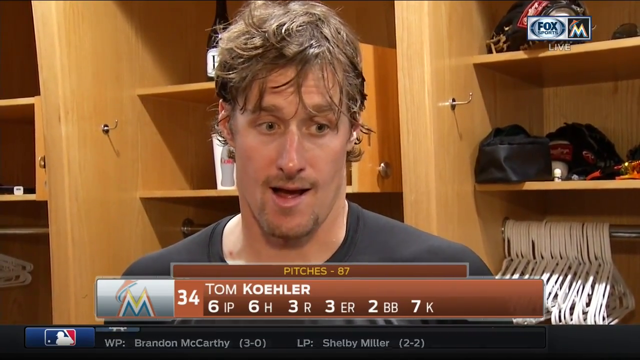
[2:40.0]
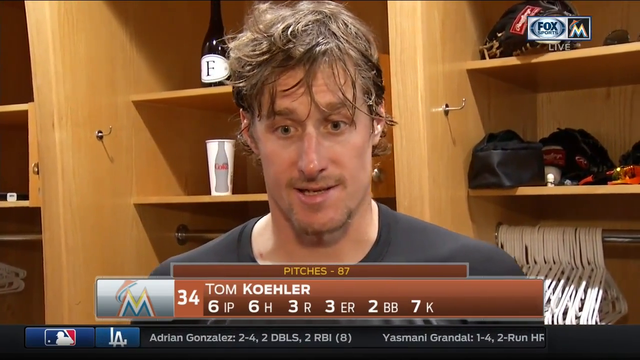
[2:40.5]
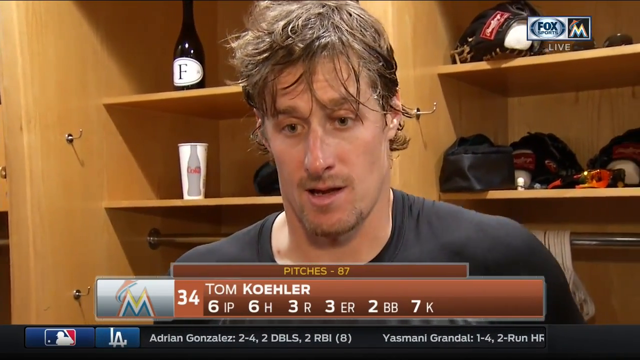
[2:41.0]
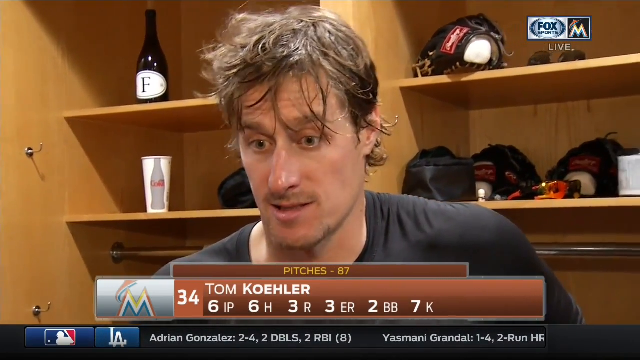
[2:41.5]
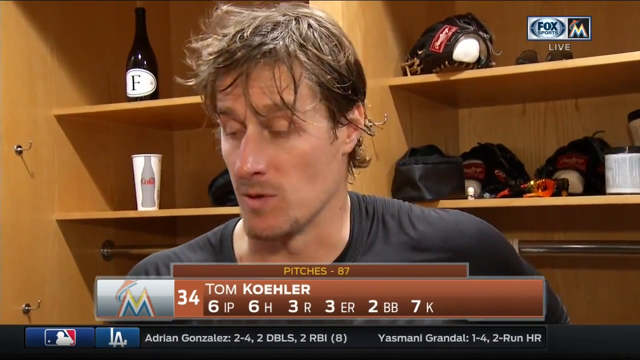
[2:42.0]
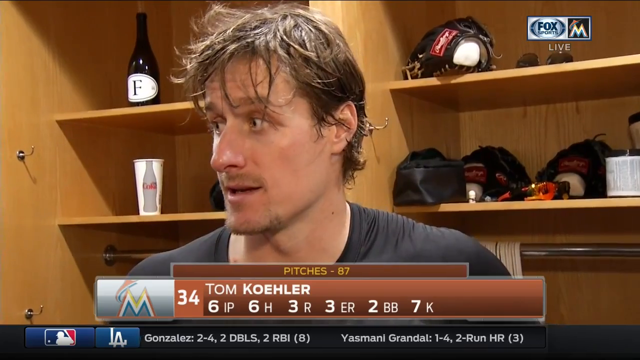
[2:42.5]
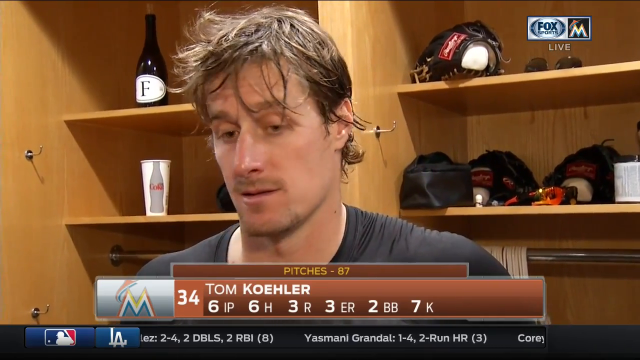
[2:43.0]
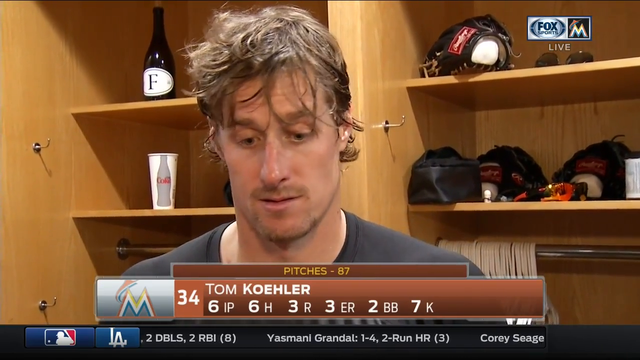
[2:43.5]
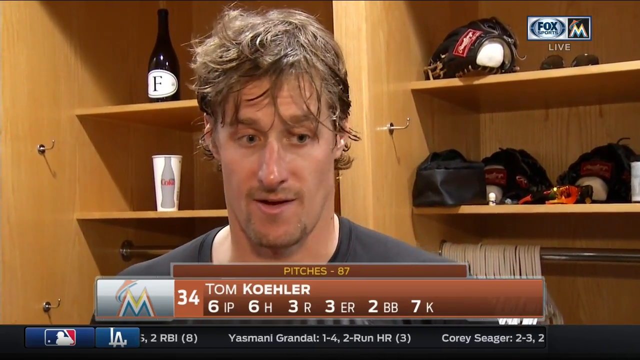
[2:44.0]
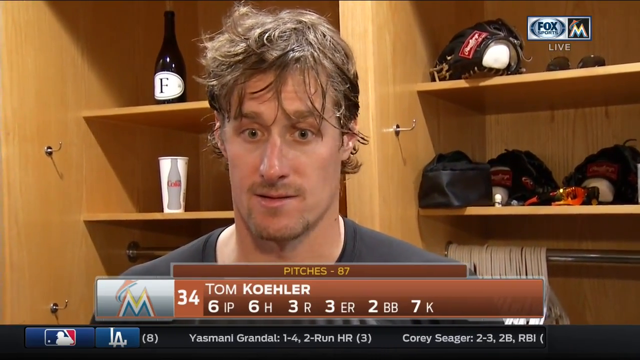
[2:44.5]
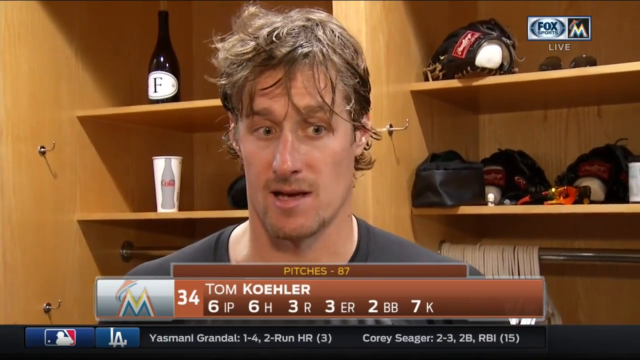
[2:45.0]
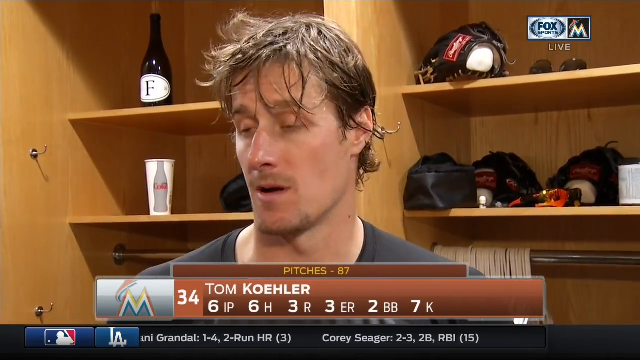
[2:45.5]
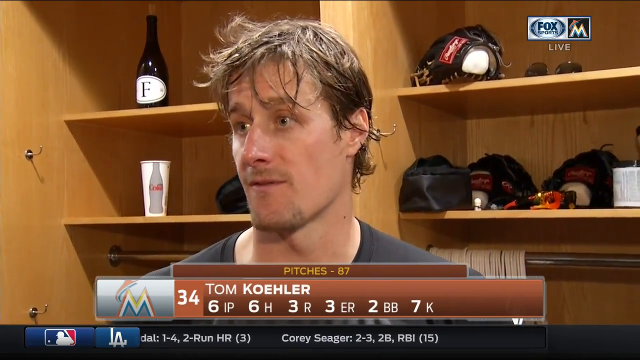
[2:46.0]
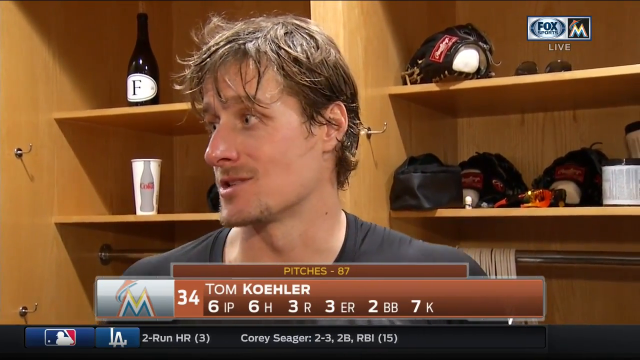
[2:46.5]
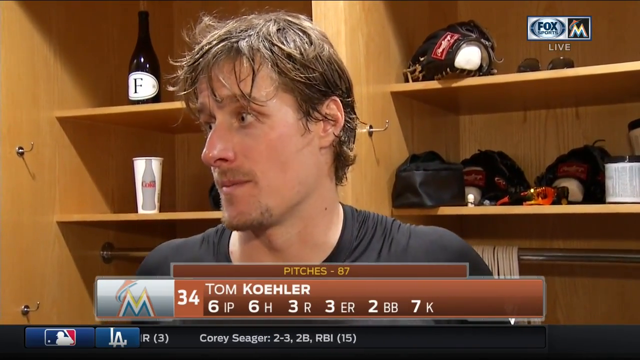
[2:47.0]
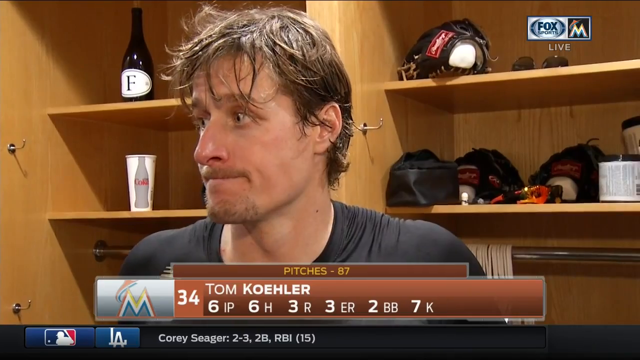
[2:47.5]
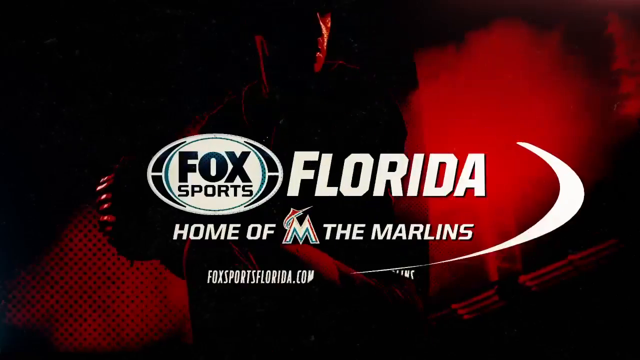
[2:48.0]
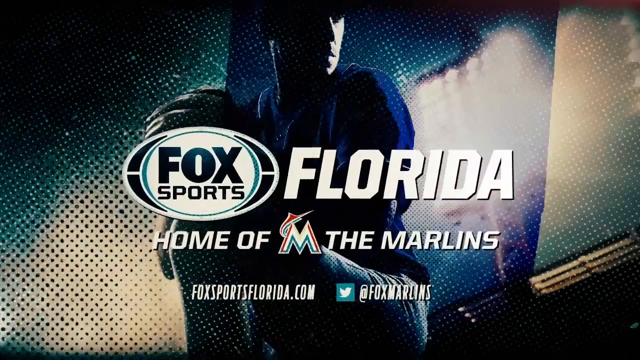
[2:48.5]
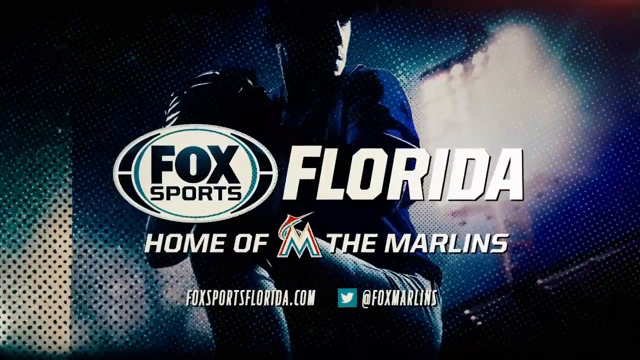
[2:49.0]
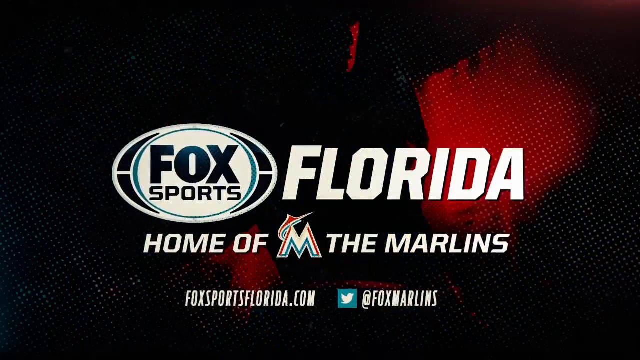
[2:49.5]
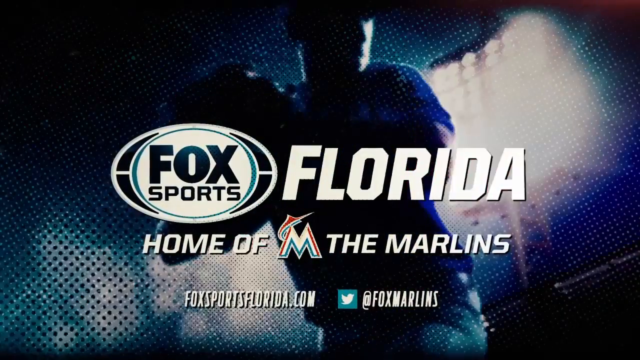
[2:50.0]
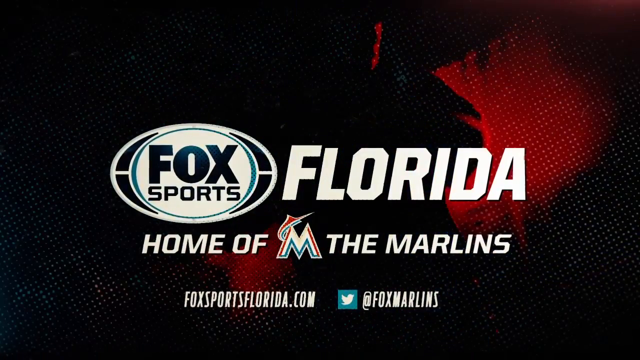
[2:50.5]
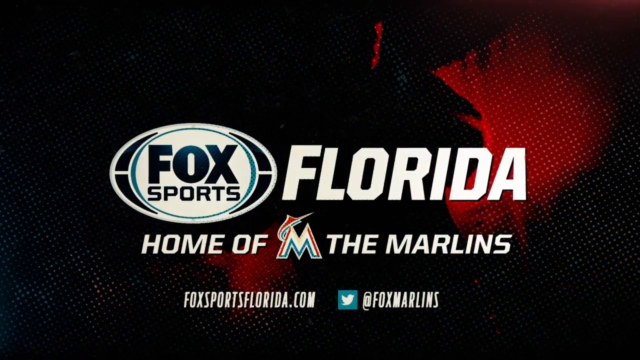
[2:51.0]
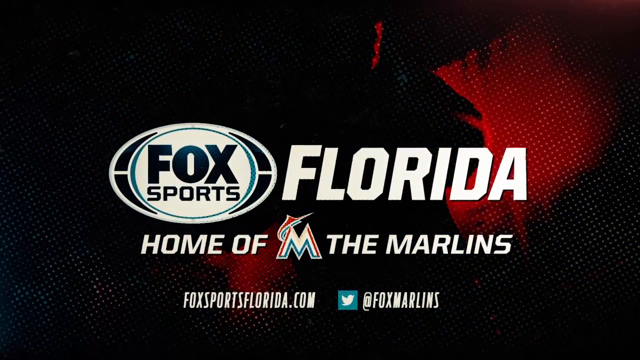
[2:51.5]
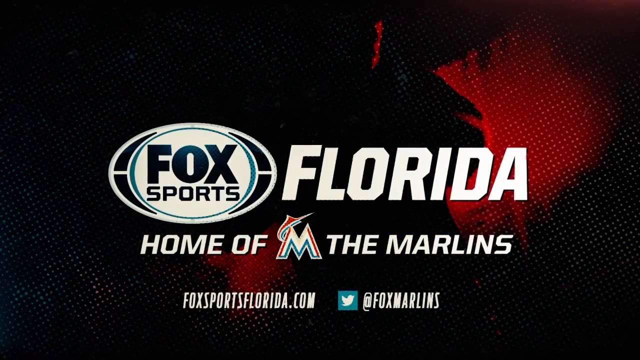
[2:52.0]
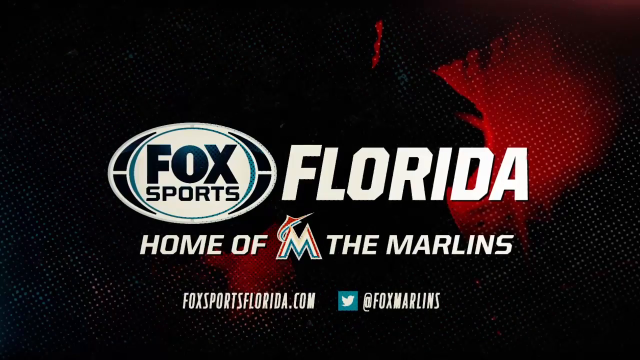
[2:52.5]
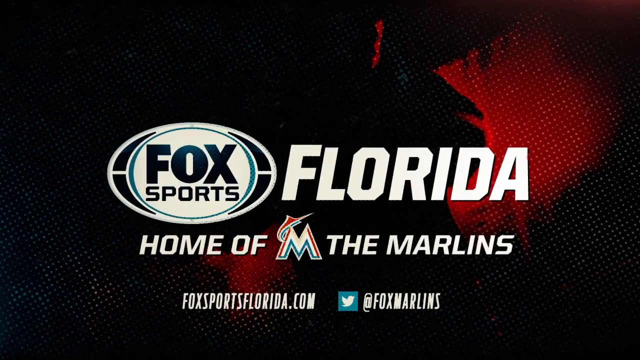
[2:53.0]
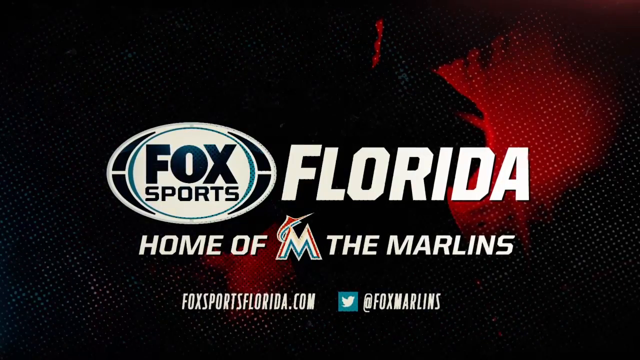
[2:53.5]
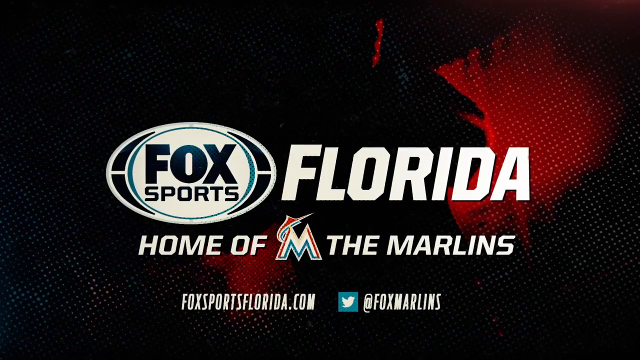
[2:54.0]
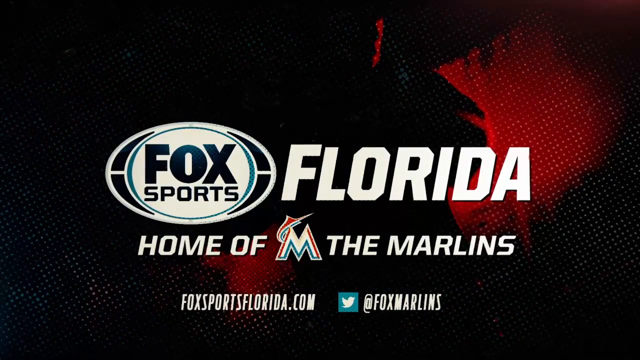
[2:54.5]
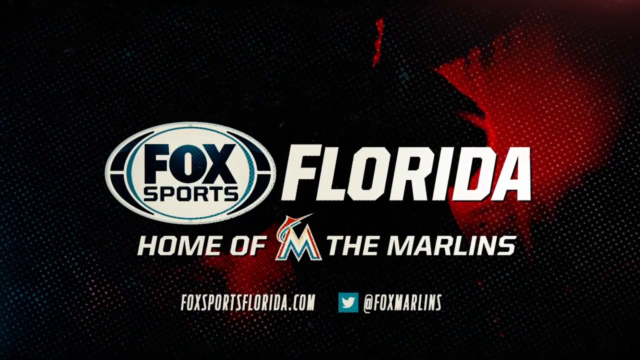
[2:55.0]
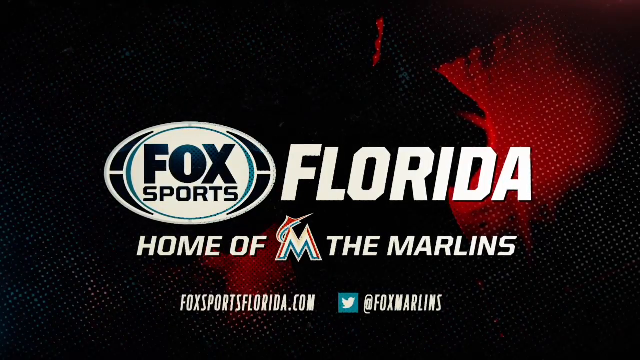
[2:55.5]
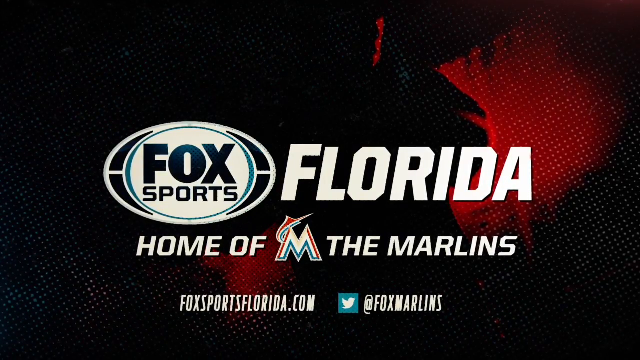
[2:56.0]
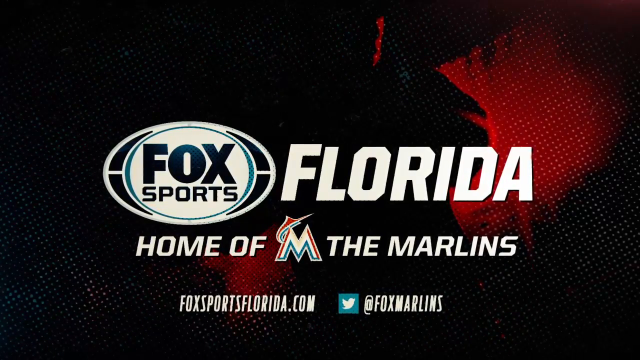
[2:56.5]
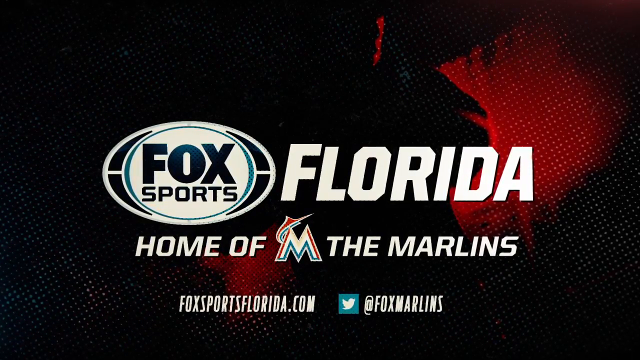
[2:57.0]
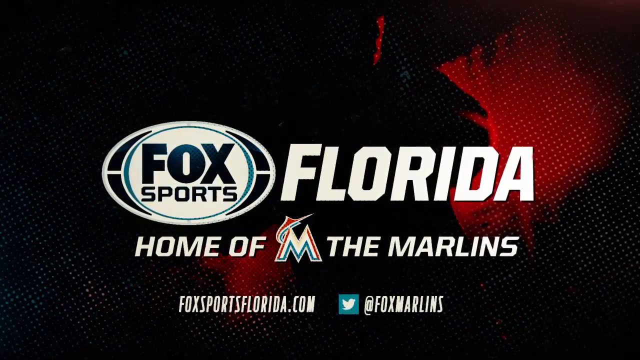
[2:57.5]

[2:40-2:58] Tom Koehler continues to talk. Then the video cuts to what is maybe a station identification. The Fox Sports logo comes up on the right, and text reads "Florida, home of the Marlins," with the Marlins logo, a capital M with a stylized marlin wrapped around it, between "of" and "the." Below it reads "FoxSportsFlorida.com" along with a Twitter logo and "Fox Marlins." There is something red and a very dark silhouette of an athlete that looks like a football player winding up, pulling his arm back with a ball and looking downfield as if about to throw.